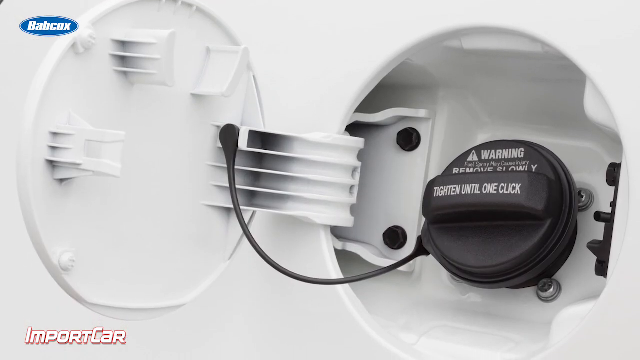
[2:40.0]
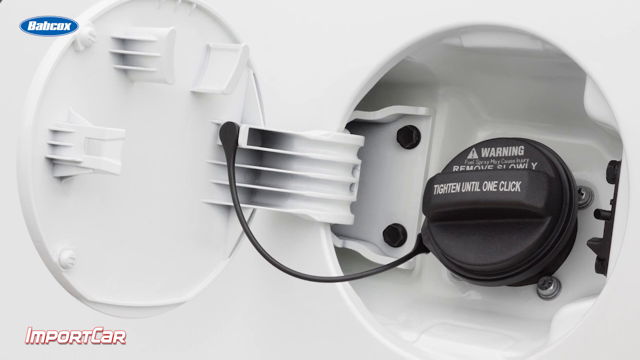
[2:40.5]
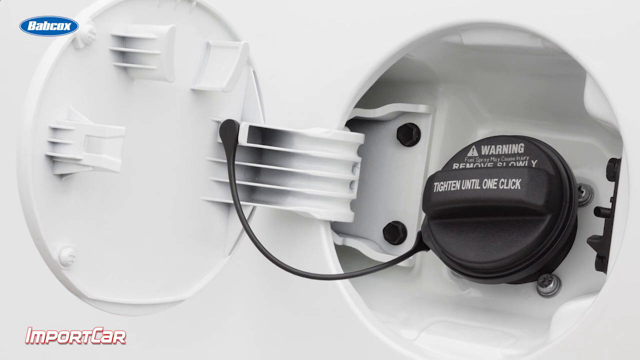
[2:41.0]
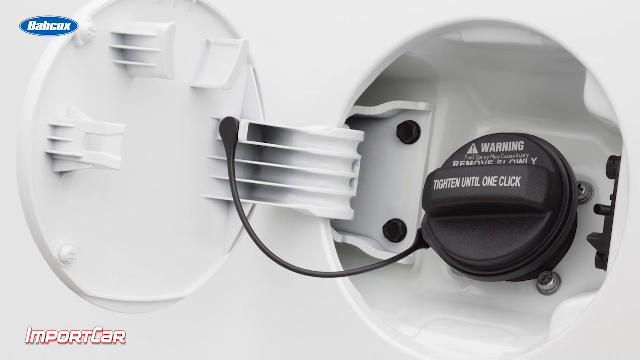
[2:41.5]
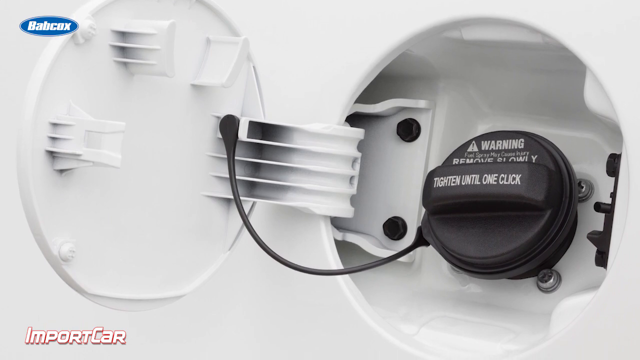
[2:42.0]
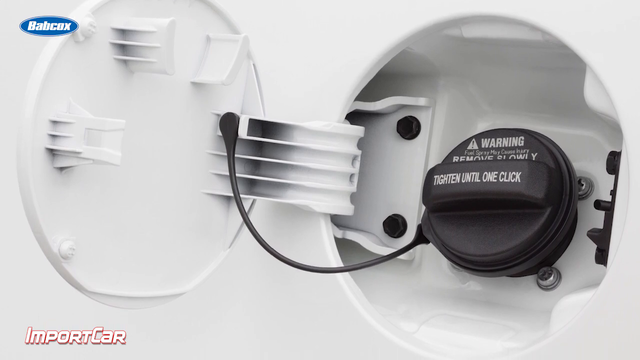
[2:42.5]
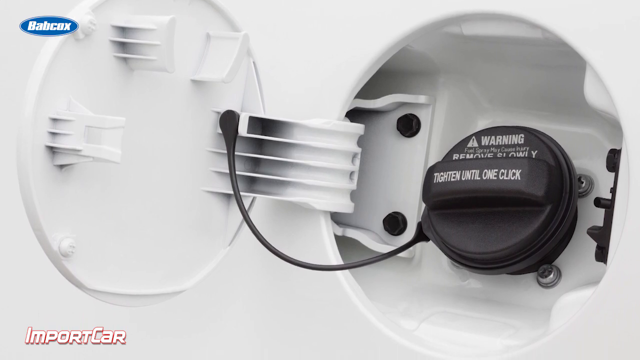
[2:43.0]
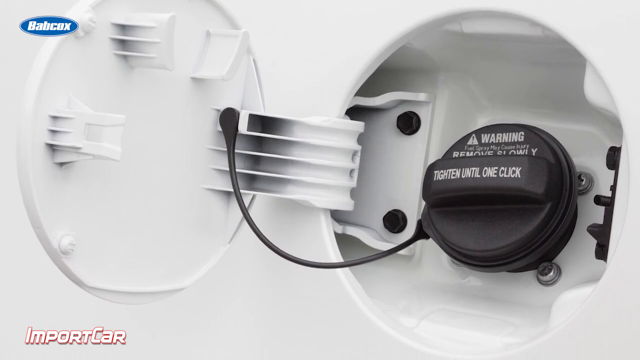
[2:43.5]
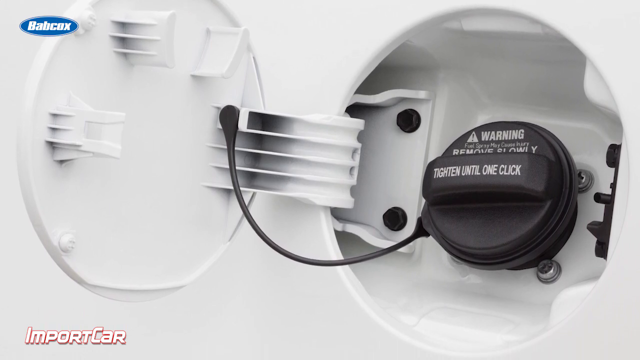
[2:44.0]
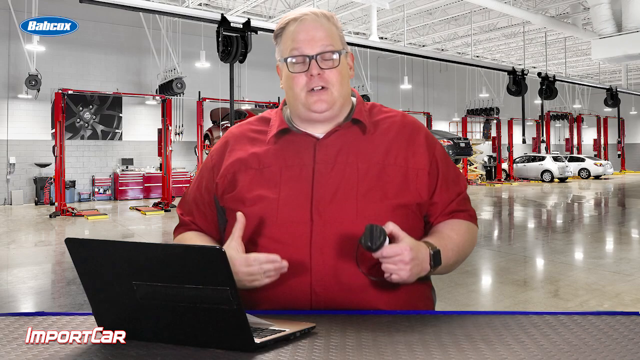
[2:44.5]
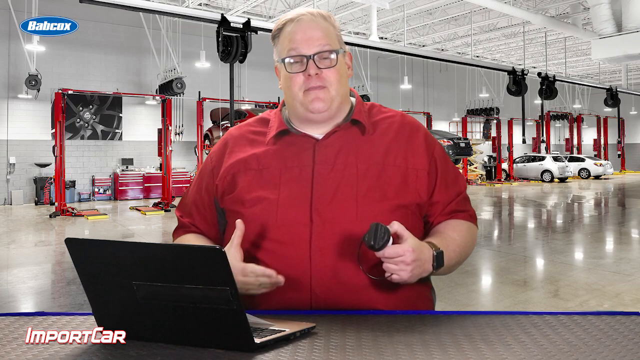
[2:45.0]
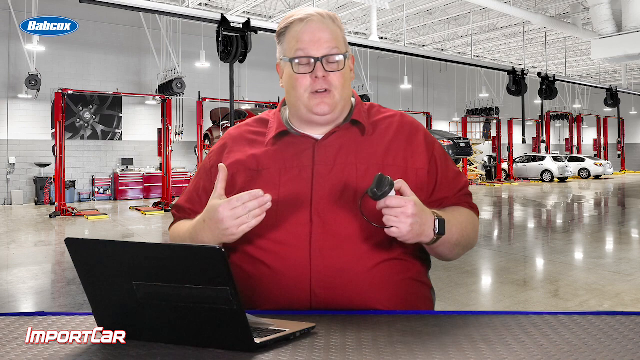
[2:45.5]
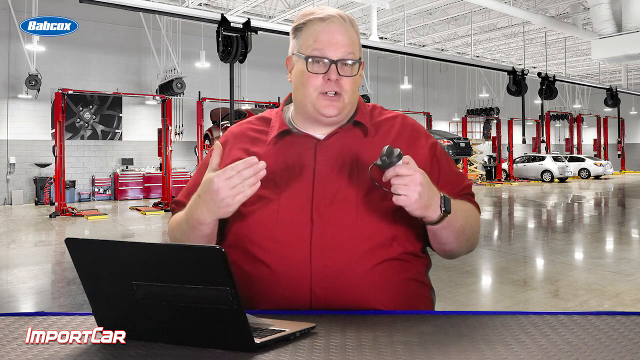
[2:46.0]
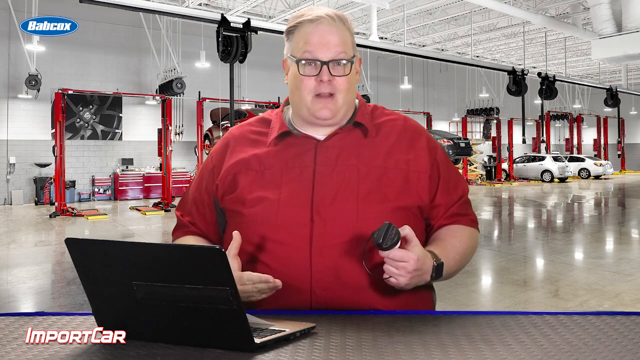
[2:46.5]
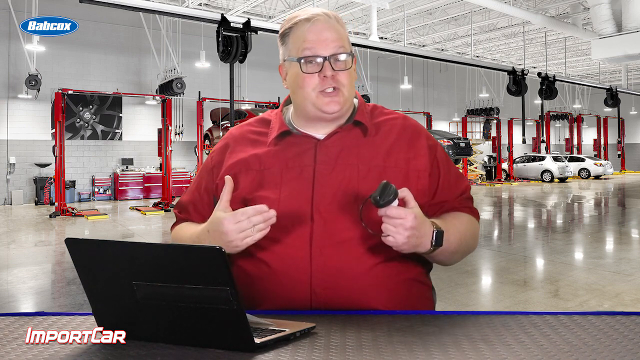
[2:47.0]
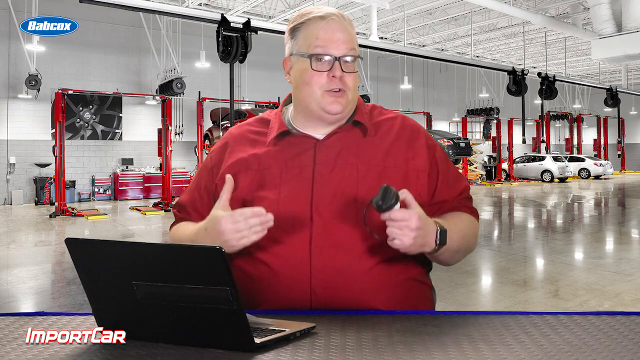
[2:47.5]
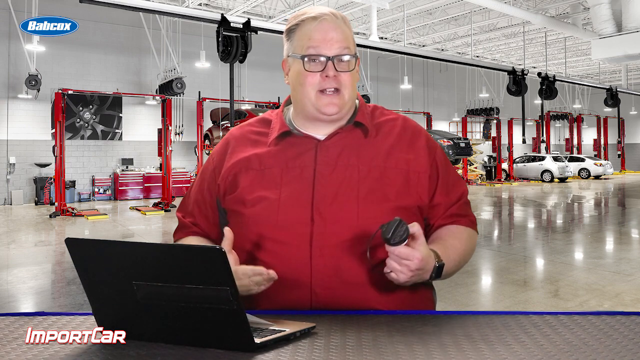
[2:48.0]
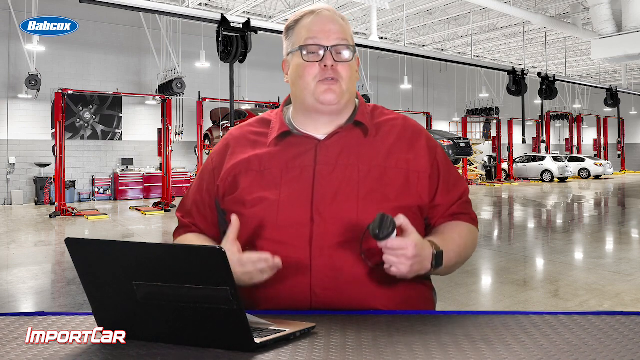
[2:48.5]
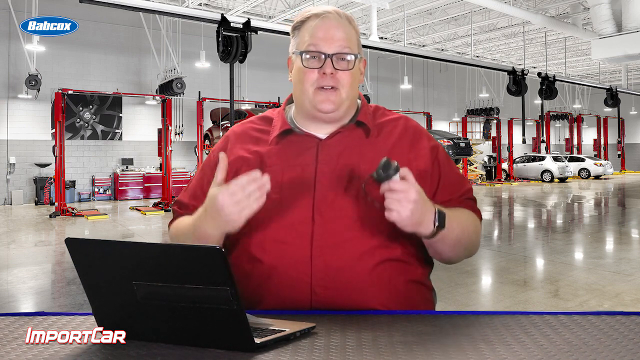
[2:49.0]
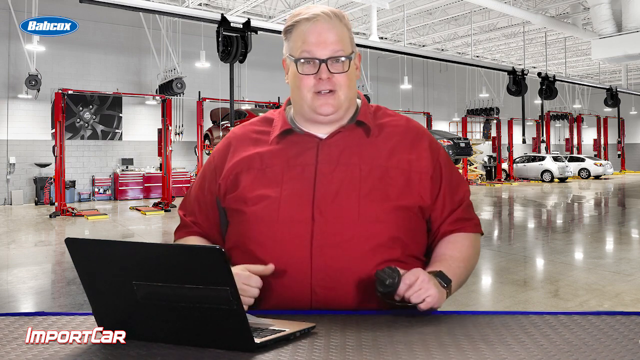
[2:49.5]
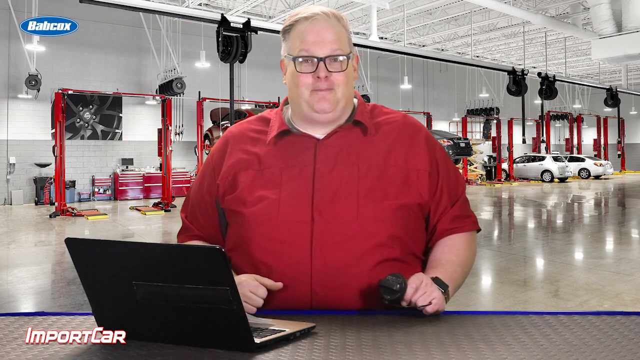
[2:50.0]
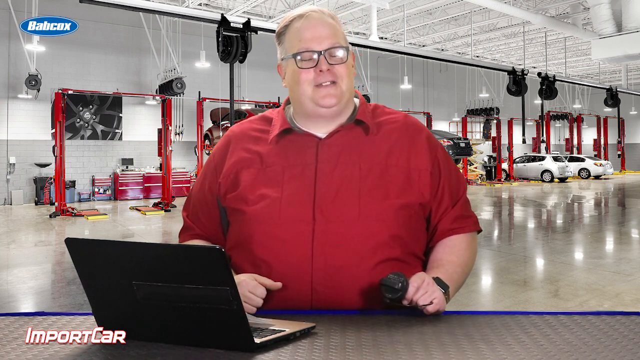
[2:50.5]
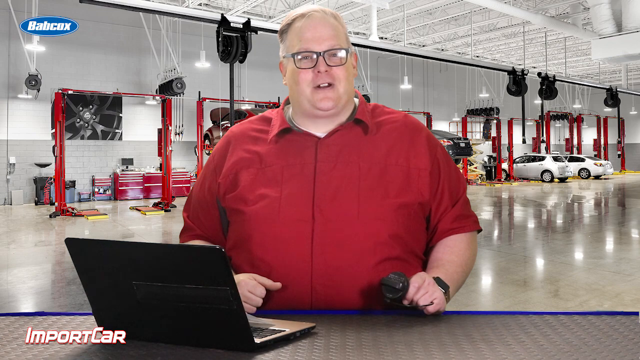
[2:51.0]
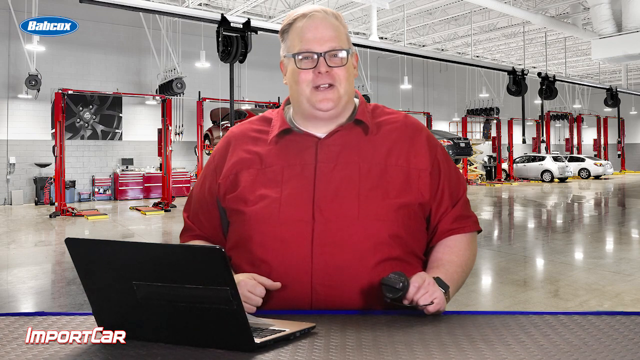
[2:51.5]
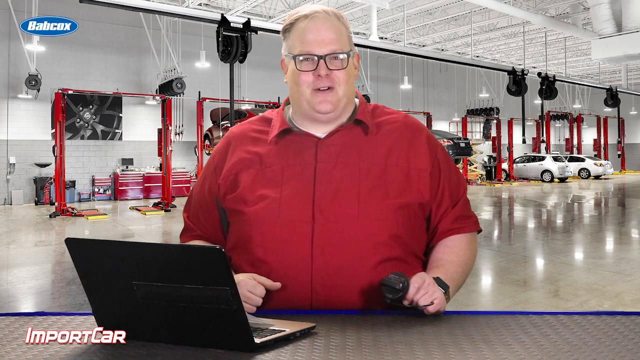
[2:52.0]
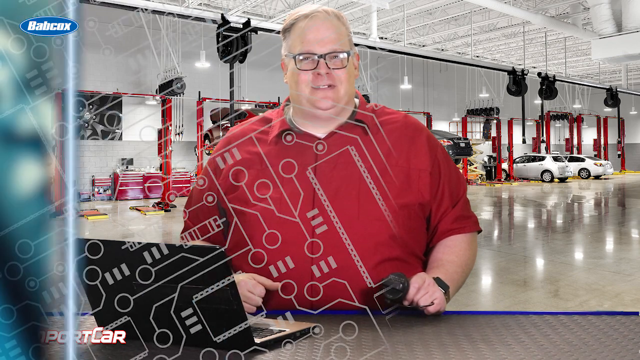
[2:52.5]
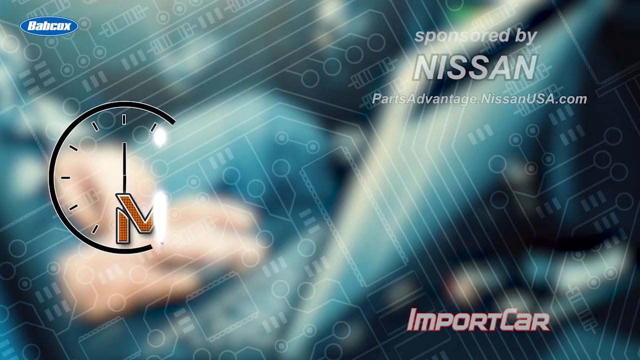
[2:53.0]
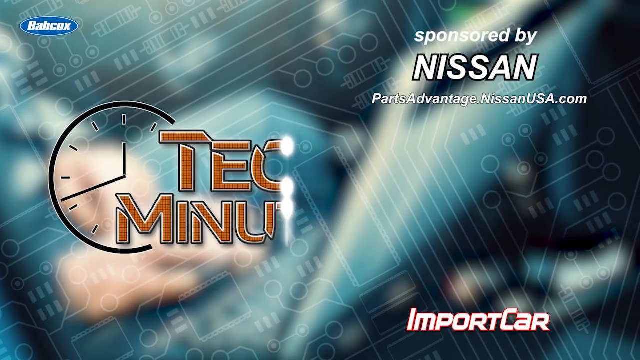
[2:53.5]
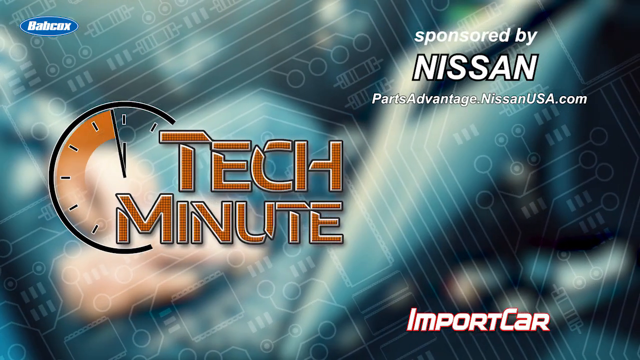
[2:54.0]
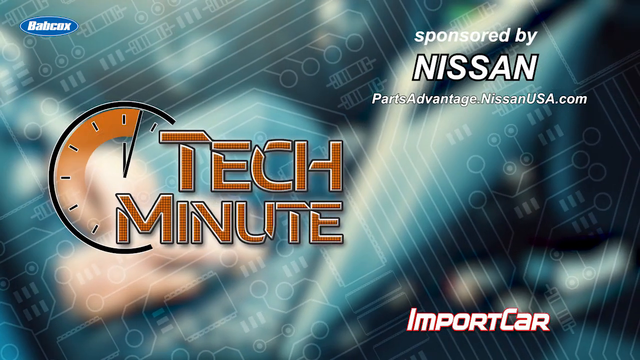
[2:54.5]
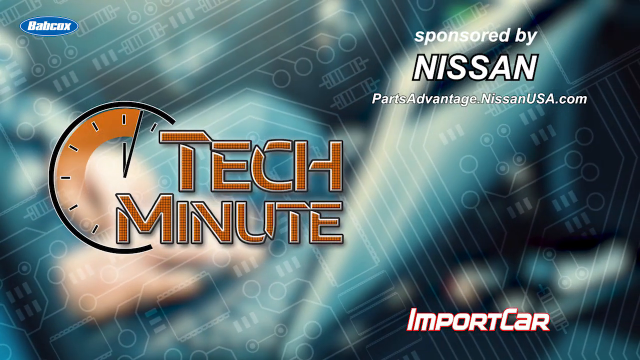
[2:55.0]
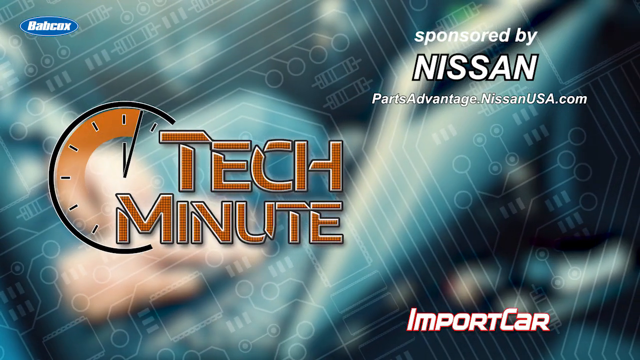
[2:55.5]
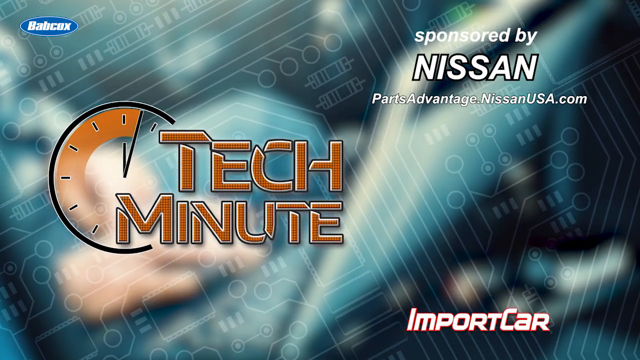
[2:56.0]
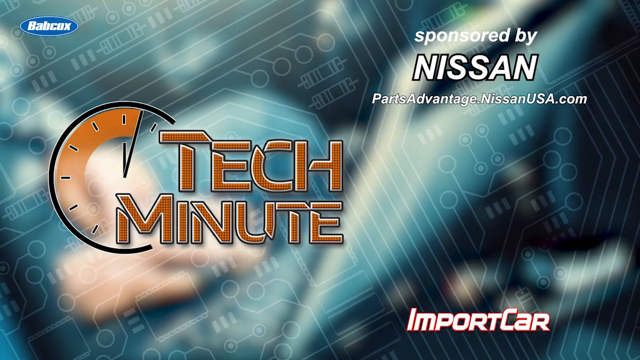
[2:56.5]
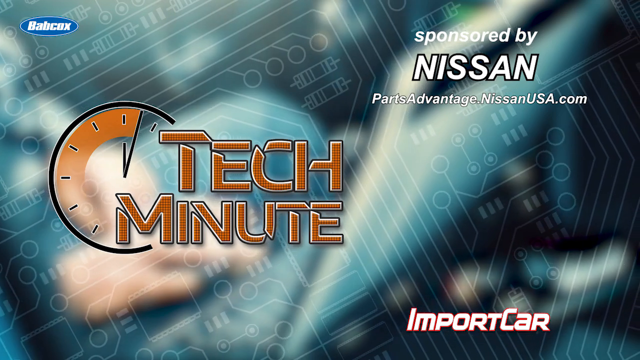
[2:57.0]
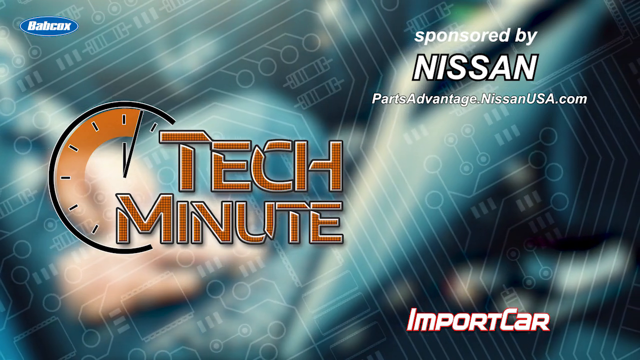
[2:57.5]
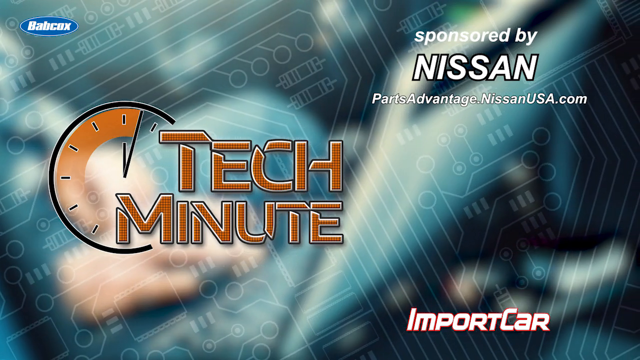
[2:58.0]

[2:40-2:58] A shot shows the fuel tank opening with the fuel cap attached to it; the cap says "tighten on one click, warning". The fuel cap is black and the car is white. The large white man, in his late twenties or early thirties and wearing glasses, returns holding the fuel cap in his hand as he speaks in his Tech Minute series. He wears a red shirt and stands in front of a laptop computer in a service garage where cars are lined up for maintenance work.